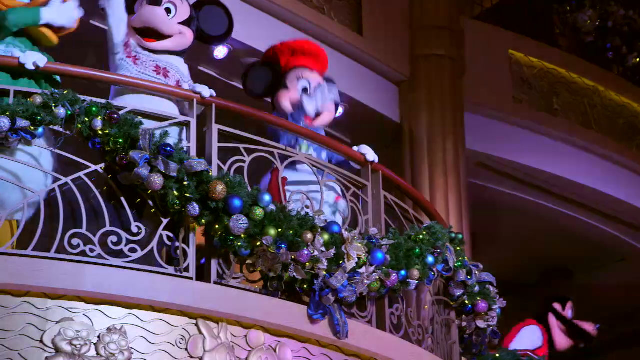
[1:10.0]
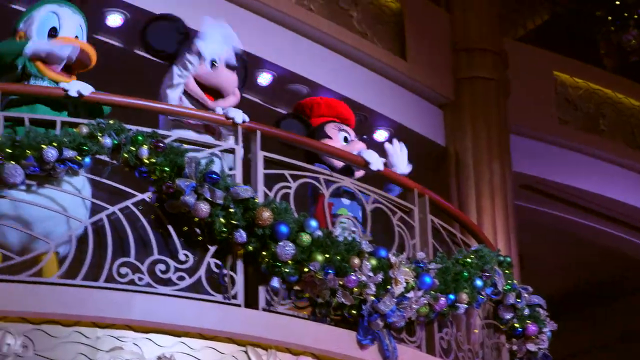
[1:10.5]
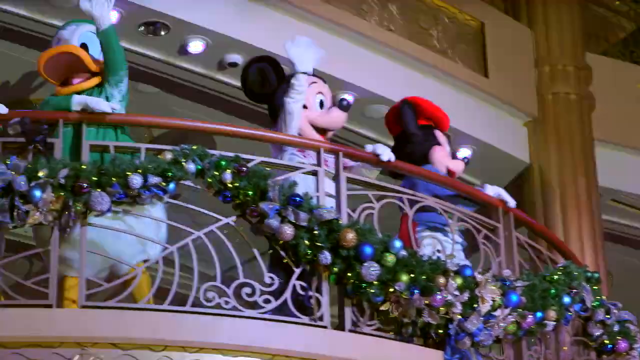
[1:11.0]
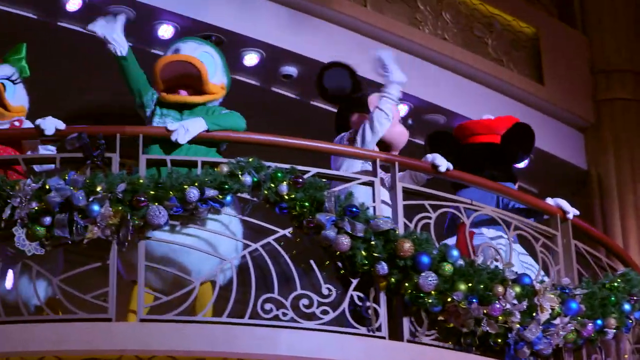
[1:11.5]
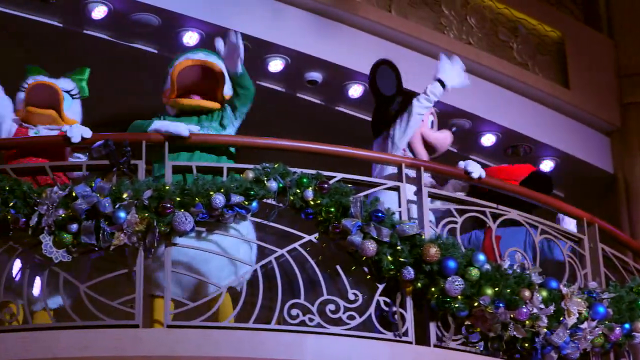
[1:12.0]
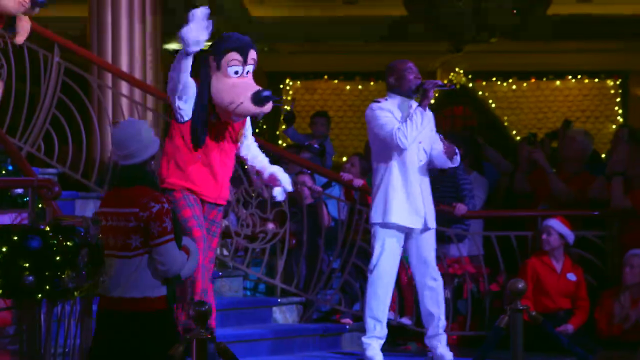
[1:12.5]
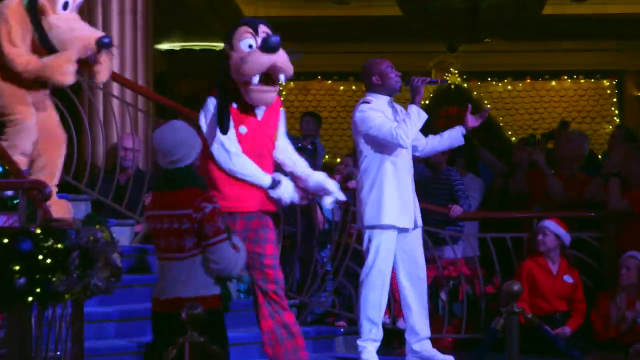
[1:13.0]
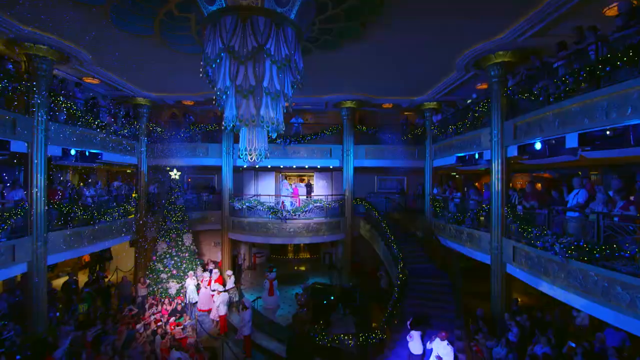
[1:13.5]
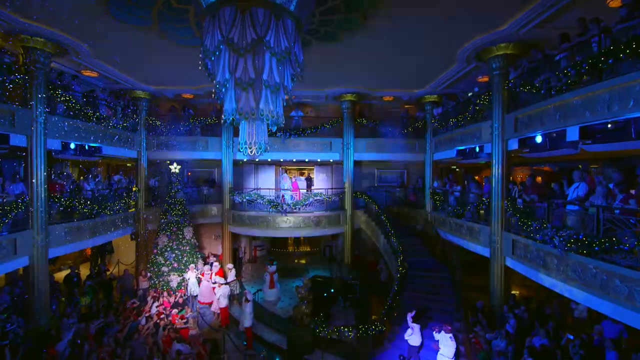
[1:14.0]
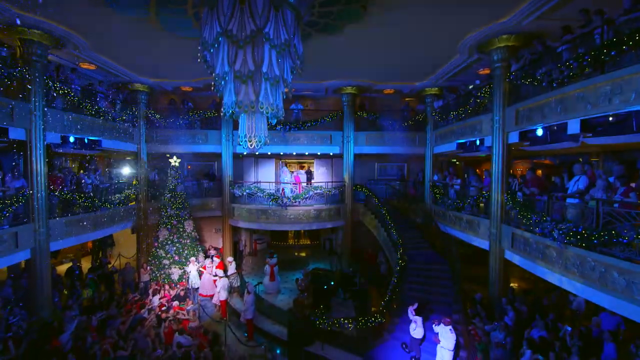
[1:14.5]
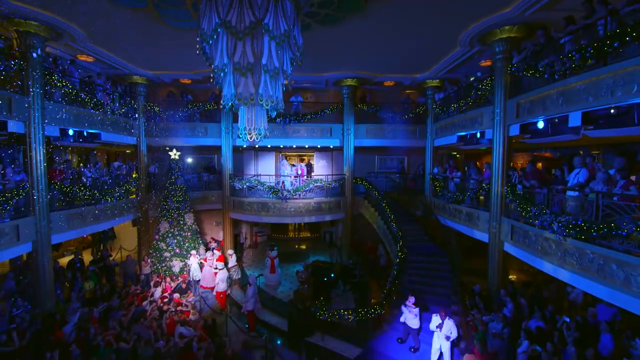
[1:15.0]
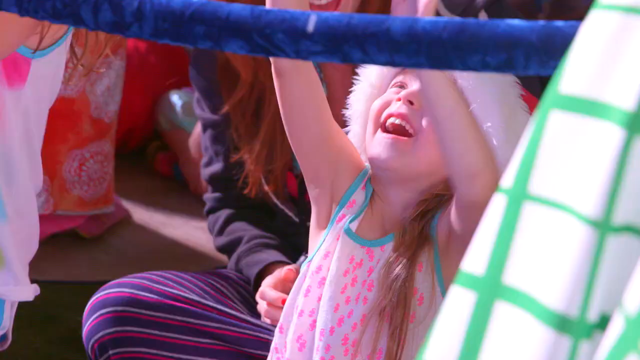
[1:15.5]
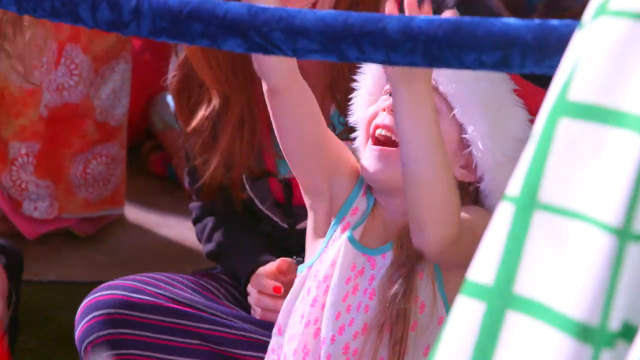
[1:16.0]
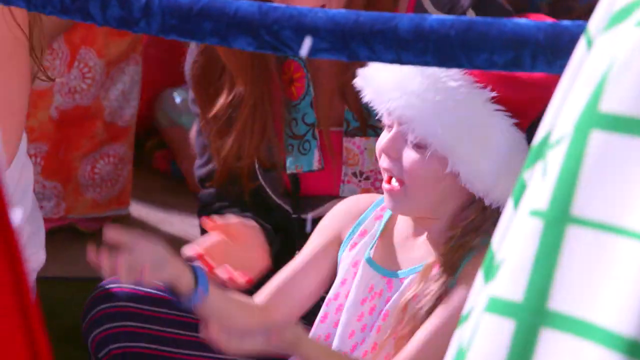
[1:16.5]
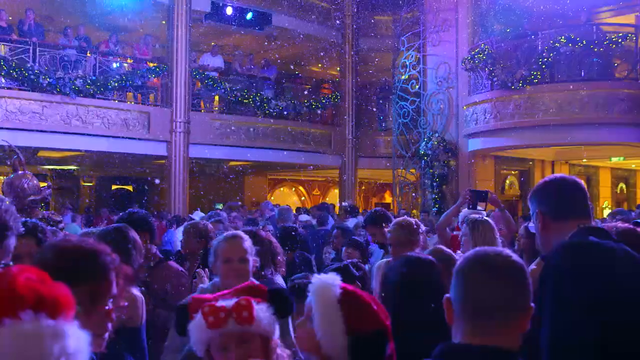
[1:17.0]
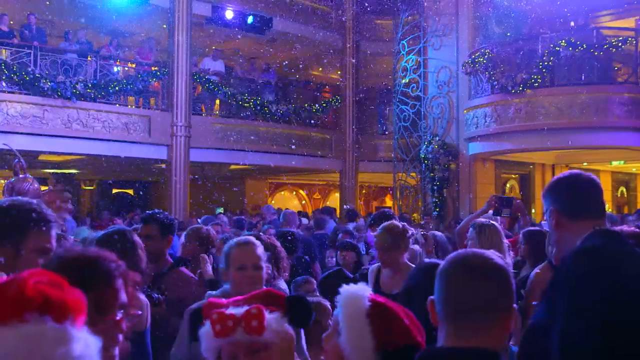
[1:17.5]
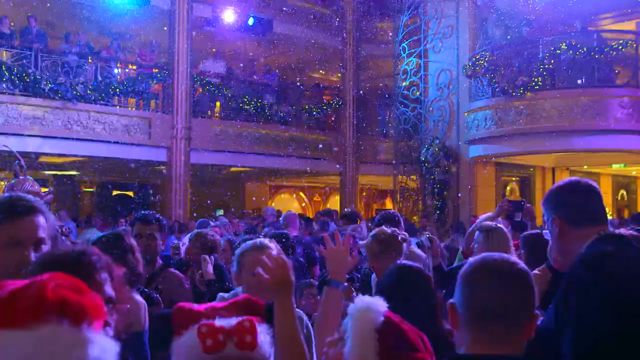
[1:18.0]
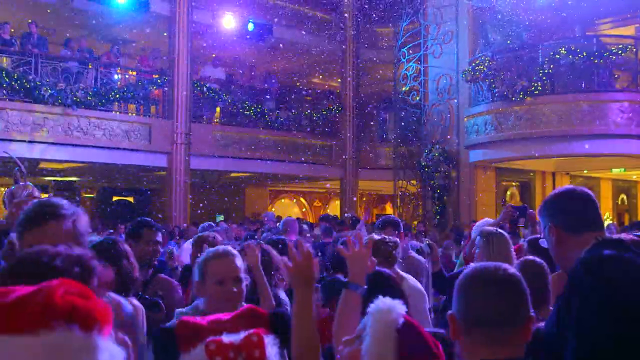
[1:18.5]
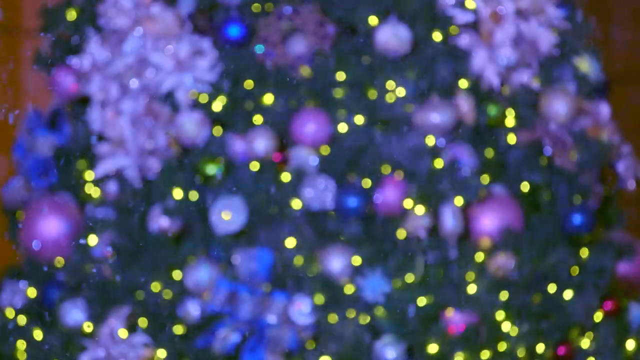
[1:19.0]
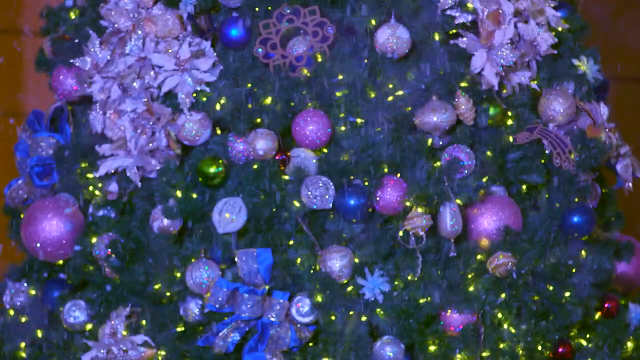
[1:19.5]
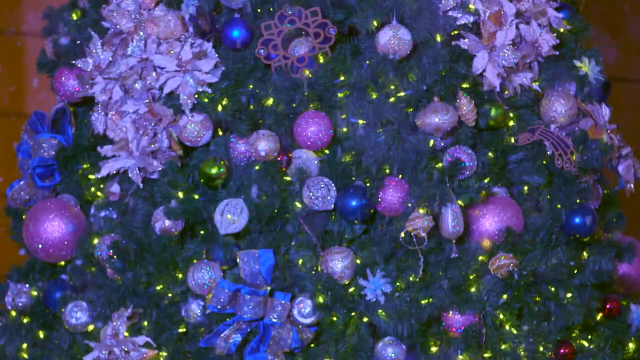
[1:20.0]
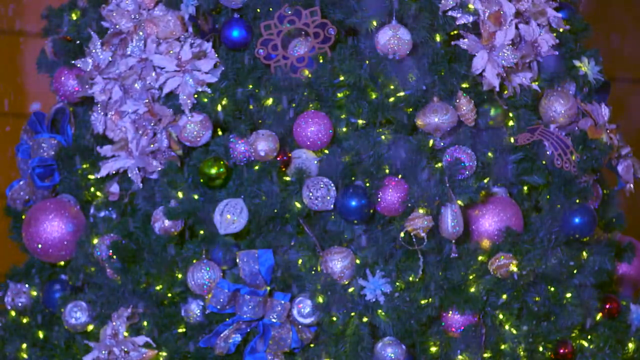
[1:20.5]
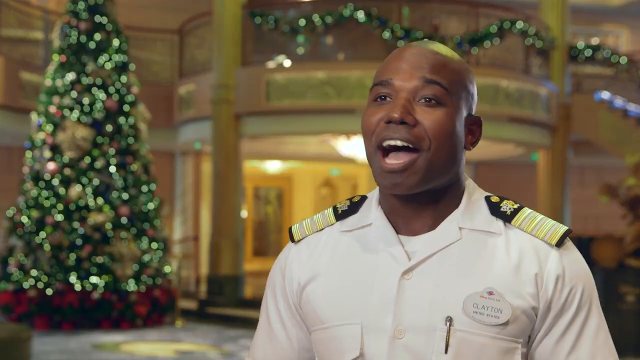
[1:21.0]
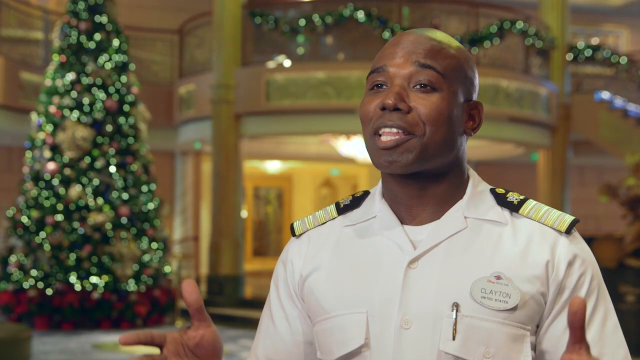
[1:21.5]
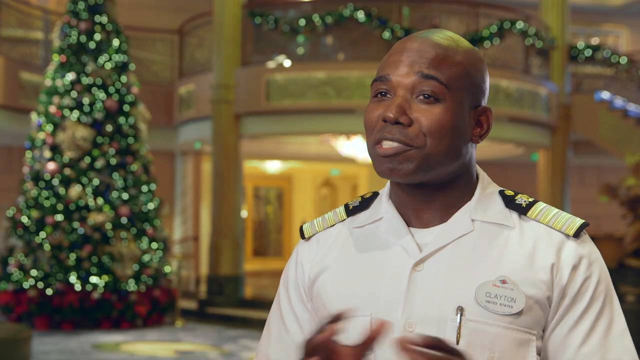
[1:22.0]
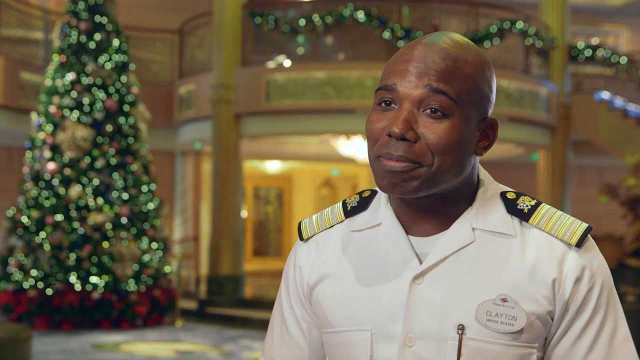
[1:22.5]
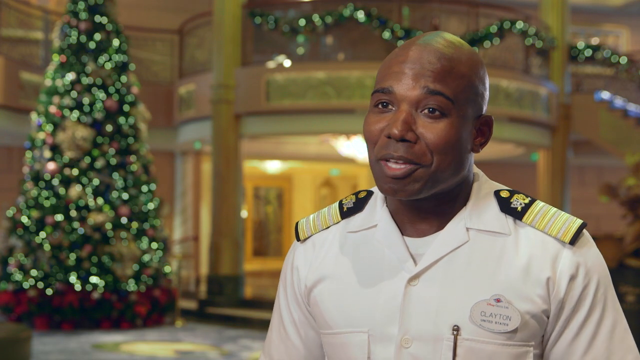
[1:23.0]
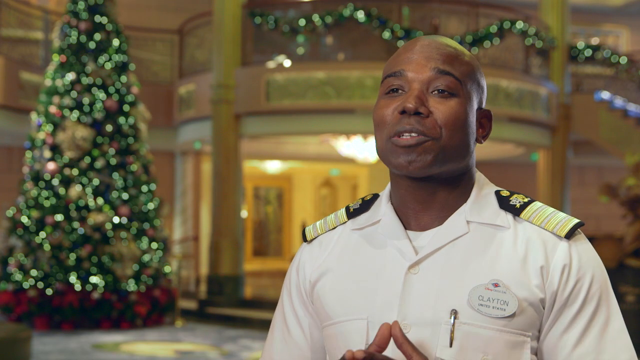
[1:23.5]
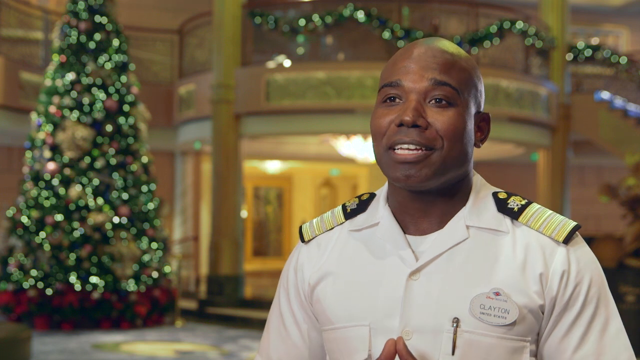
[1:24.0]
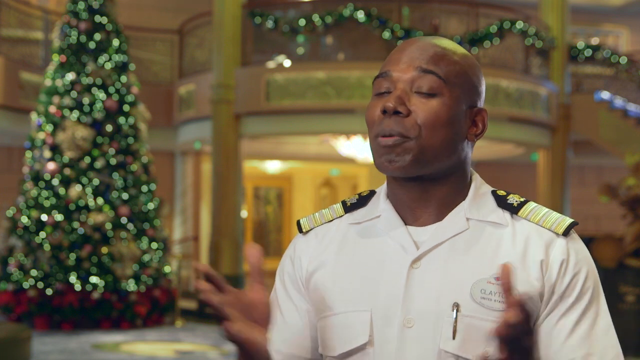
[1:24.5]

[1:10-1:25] Viewed from below but zoomed in, many Disney characters are on the mezzanine: Mickey and Minnie Mouse, Donald Duck and Daisy Duck all wave toward the camera. Goofy and Pluto walk down the stairs. A very far shot shows the atrium's three levels, with people watching from the mezzanines all around. By the Christmas tree, Santa and Mrs. Claus are in a spotlight along with some dancers, and another spotlight is on the cruise director on the right-hand side. A close-up of audience members shows a little girl in a Santa hat who looks like she is reaching up to catch fake snow falling down. The whole atrium appears covered with snow coming down, with lots of people standing around. A close-up of the Christmas tree shows more snow coming down. Clayton, the cruise director, a Black man wearing white with epaulets, talks to the camera, looking very friendly and excited.